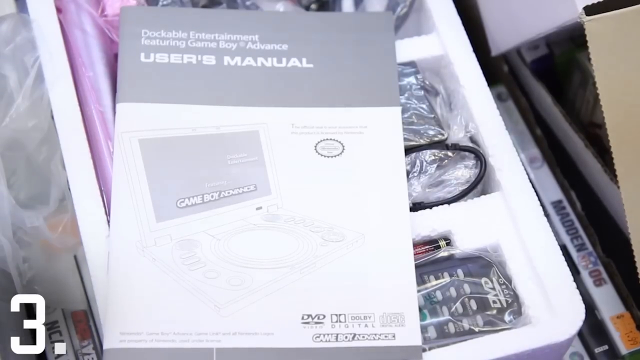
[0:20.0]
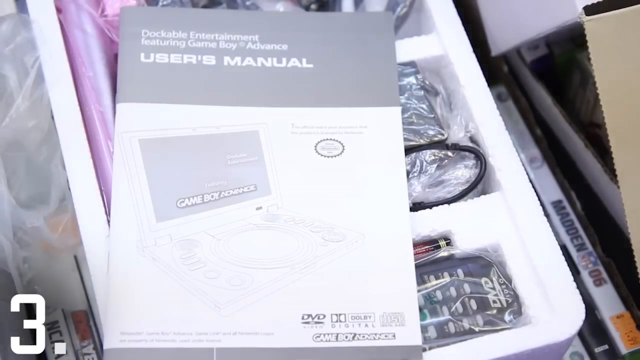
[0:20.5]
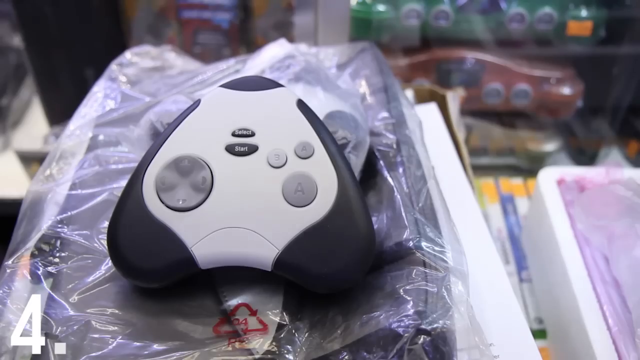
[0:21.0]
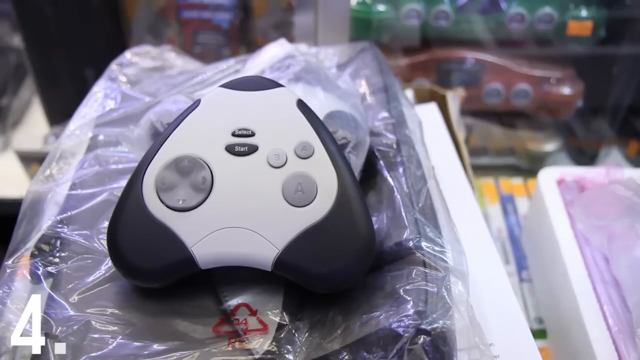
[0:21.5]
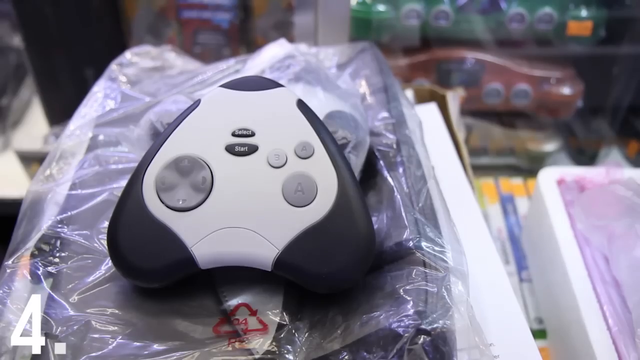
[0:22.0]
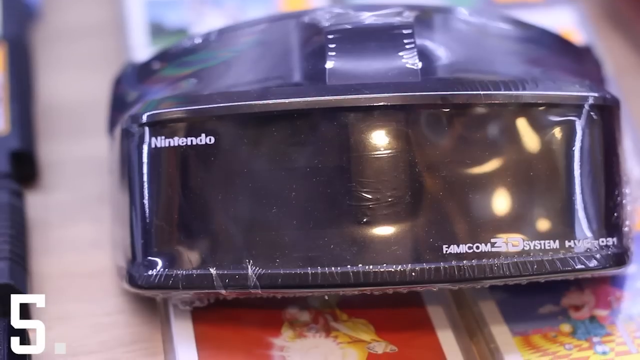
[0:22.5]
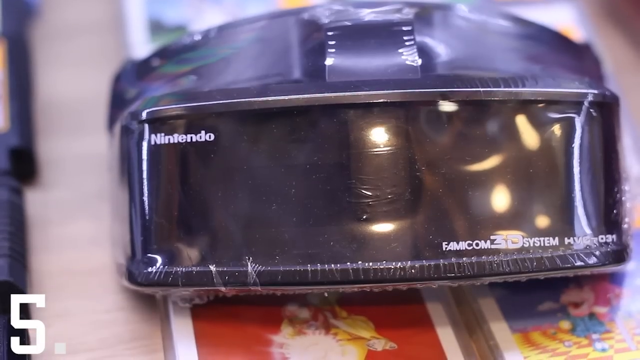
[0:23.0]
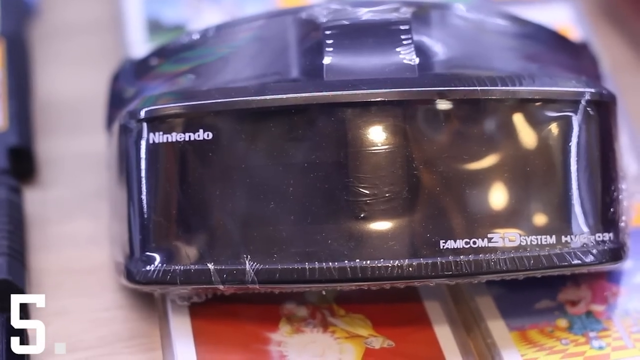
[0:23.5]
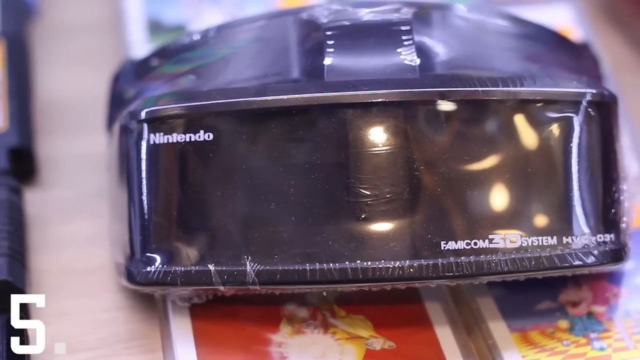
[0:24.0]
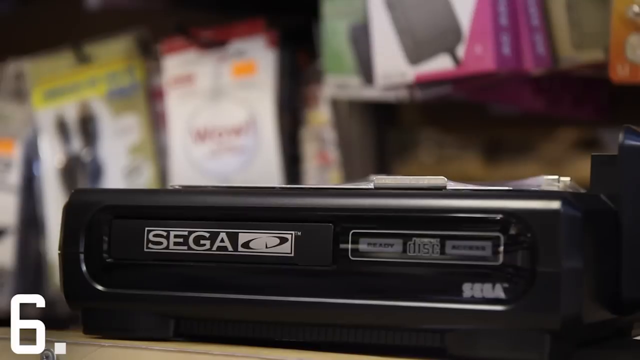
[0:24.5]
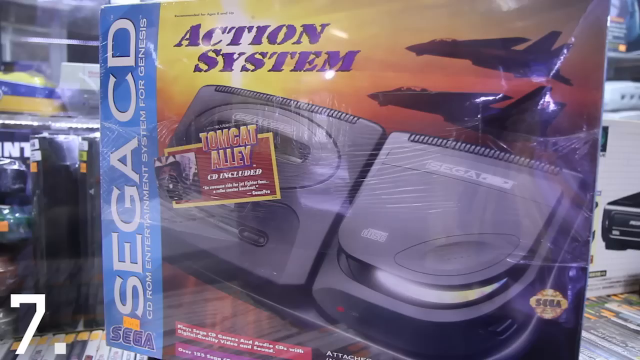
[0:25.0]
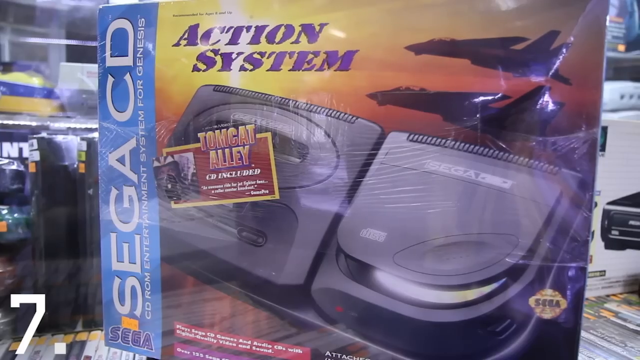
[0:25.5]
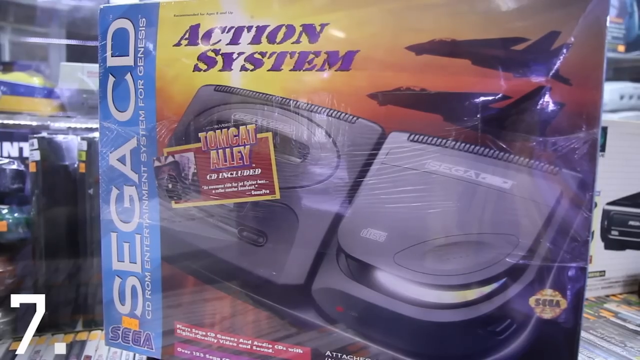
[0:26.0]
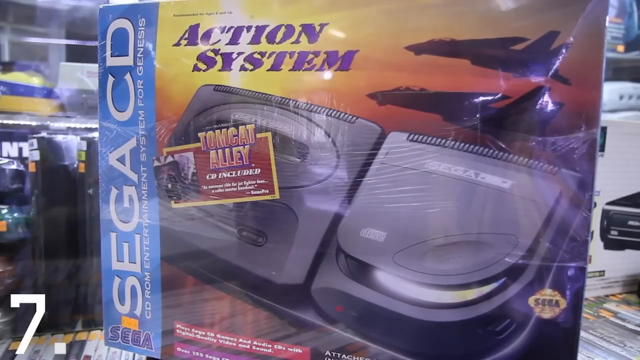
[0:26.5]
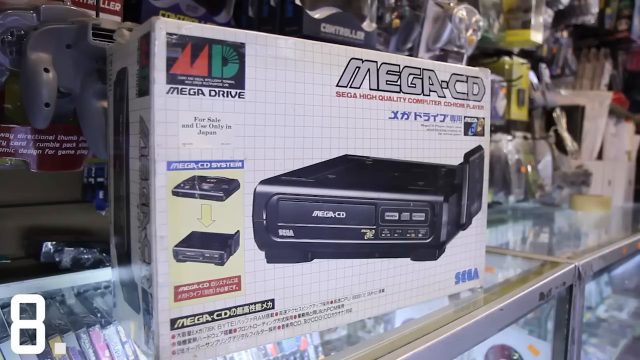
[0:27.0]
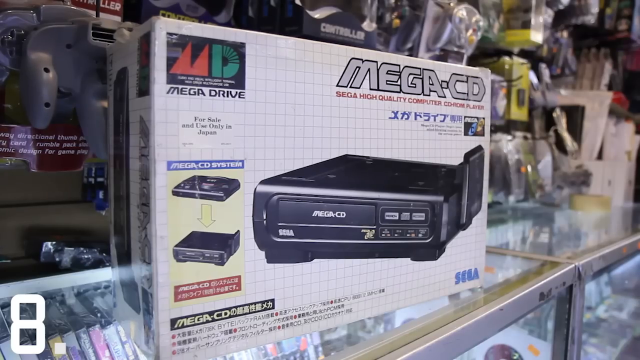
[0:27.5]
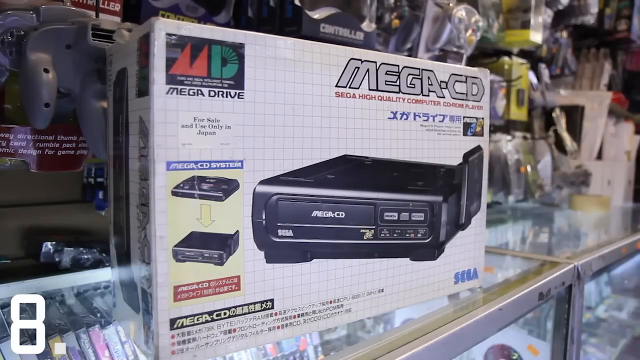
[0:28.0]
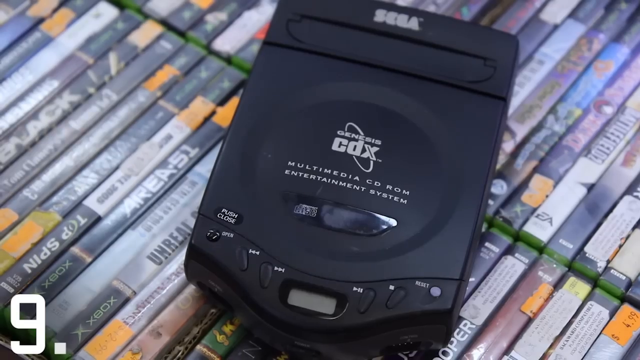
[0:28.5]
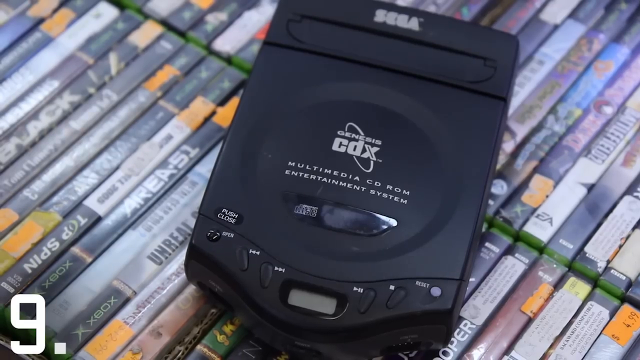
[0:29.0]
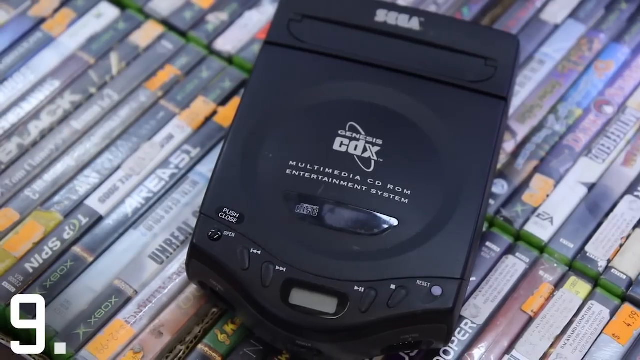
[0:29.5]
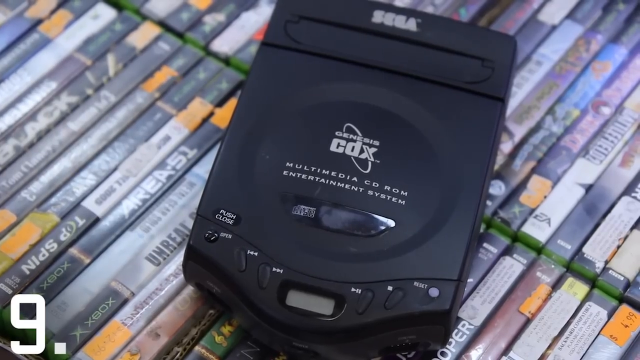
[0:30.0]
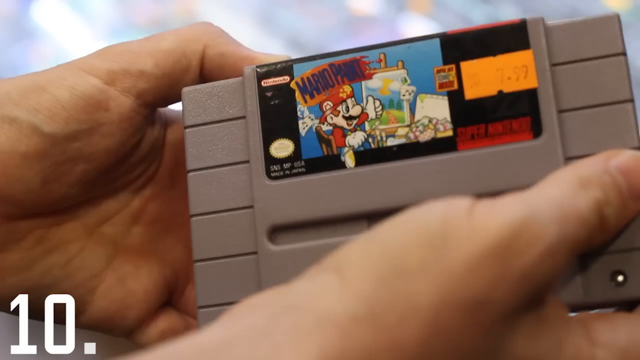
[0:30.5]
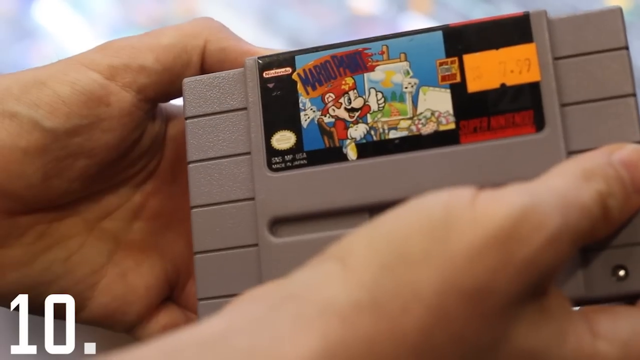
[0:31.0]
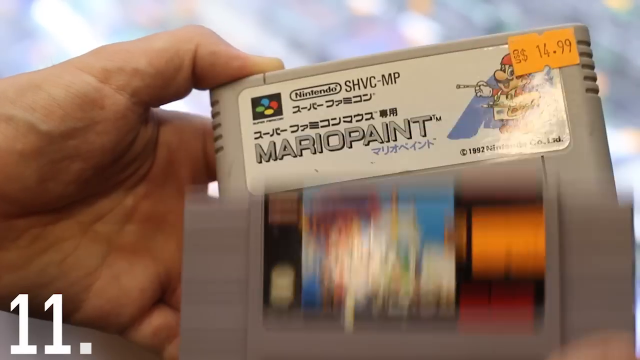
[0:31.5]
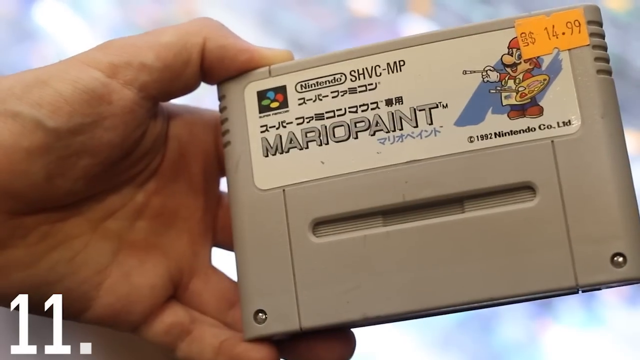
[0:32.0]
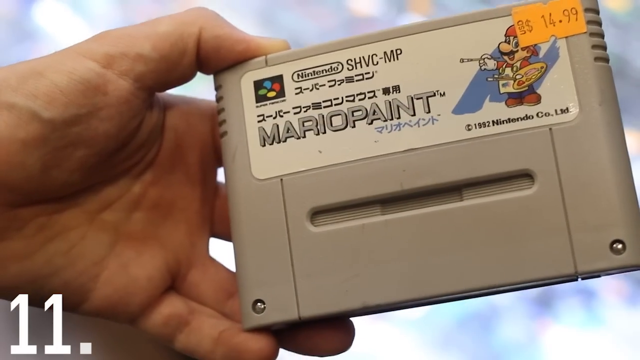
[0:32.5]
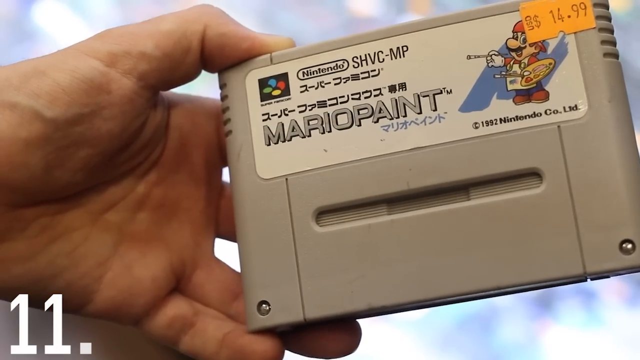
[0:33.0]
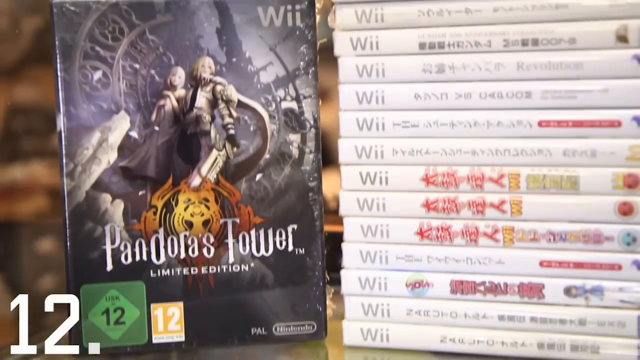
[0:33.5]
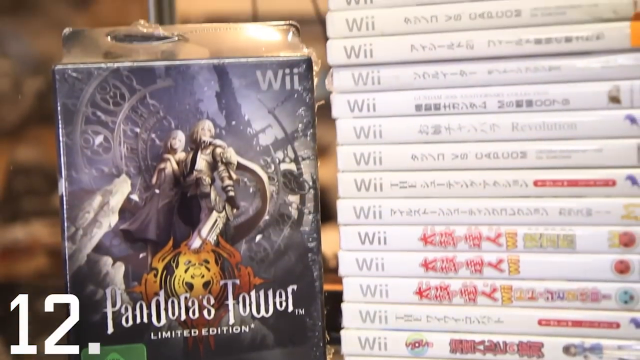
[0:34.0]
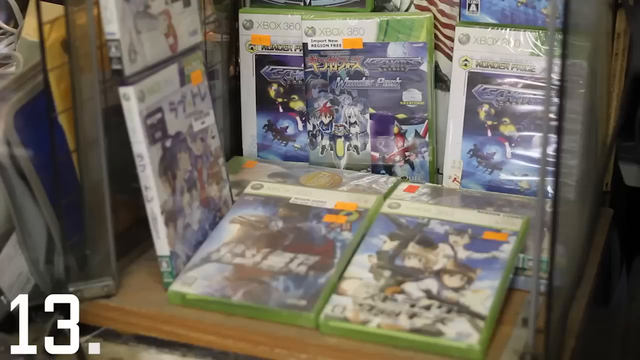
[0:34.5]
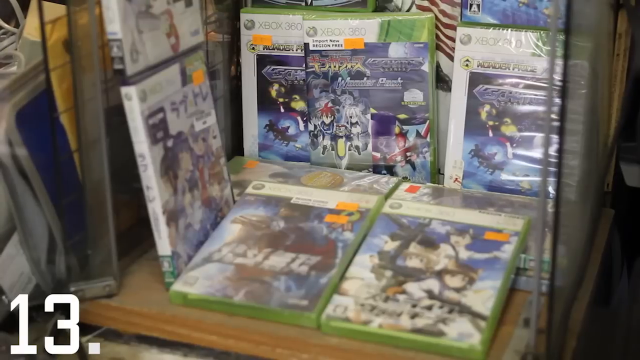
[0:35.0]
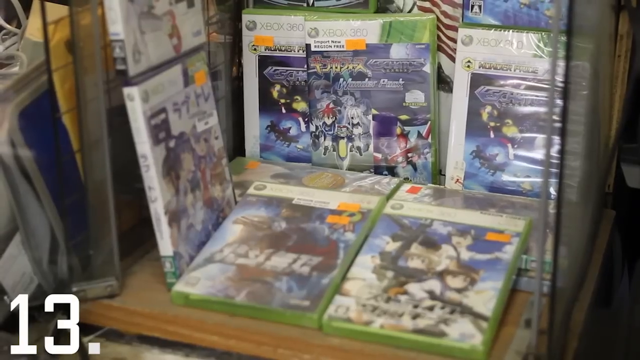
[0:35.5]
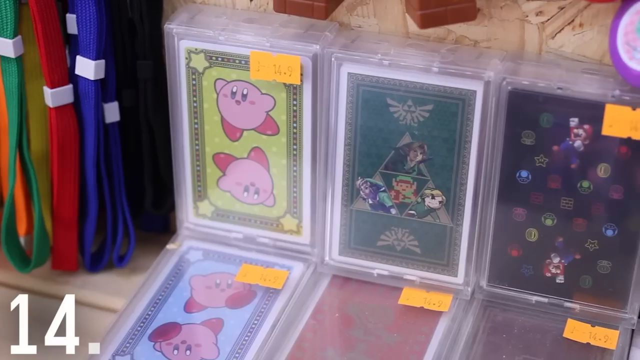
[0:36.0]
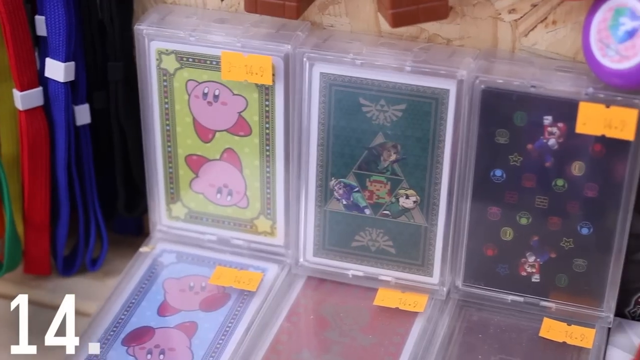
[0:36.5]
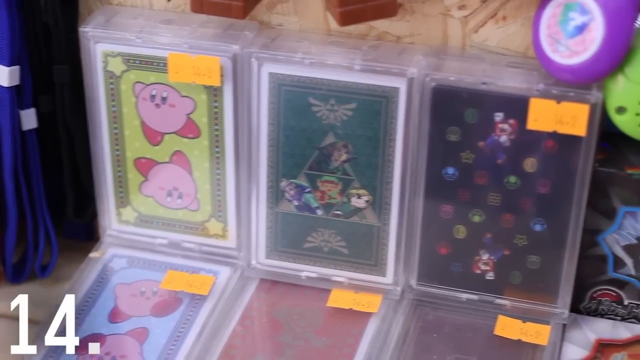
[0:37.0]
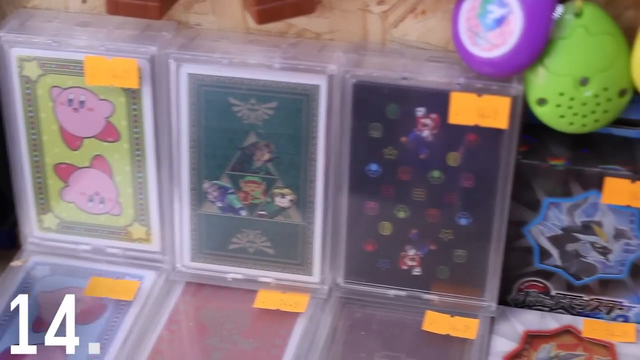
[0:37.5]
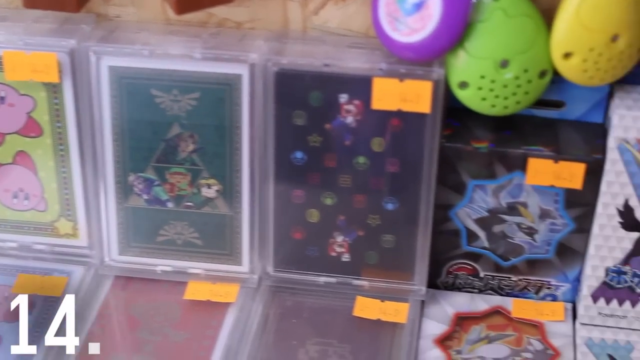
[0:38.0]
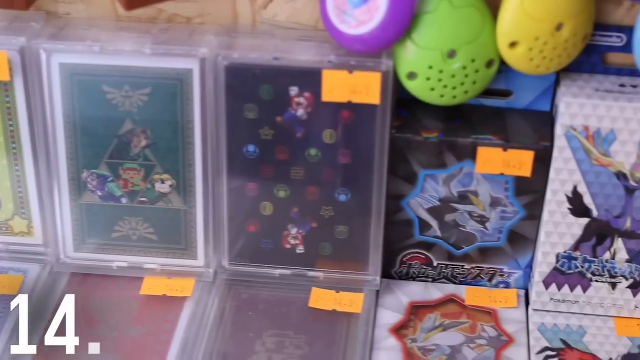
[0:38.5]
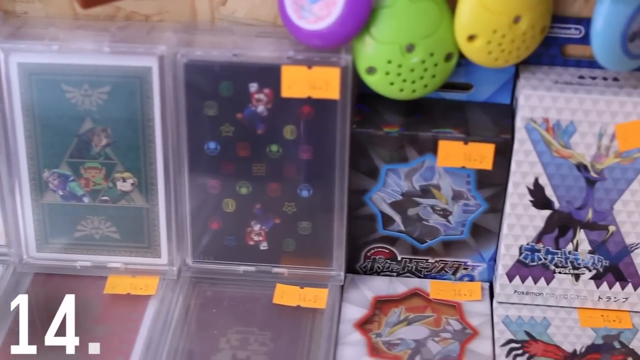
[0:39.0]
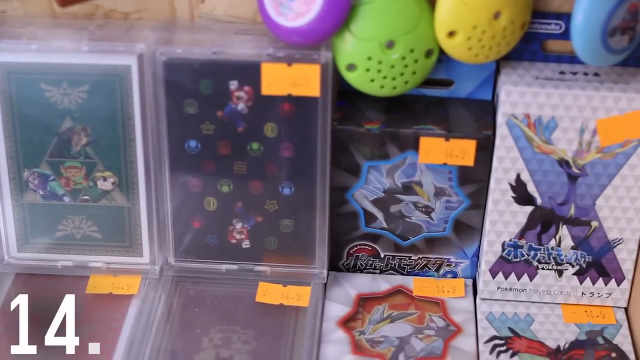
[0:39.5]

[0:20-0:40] A user's manual for a Game Boy Advanced is shown, and underneath it is something like a styrofoam package holding a remote for a DVD and some other things. The video shows some kind of controller, a Famicom 3D system wrapped in cellophane, a Sega CD in a box with cellophane wrap, a Mega CD console in its original box with Japanese writing on it, a Genesis CDX multimedia CD-ROM entertainment system, Mario Paint in different versions, and Pandora's Tower Limited Edition, featuring a bunch of different consoles and cartridges in the game store. Some Nintendo 64s wrapped in cellophane are in the background, along with all sorts of controllers, cords and cables hanging on the wall. There is a glass display case, and the store is loaded with all types of video games. Another small cluster or display shows what look like anime-type, cartoonish video games.